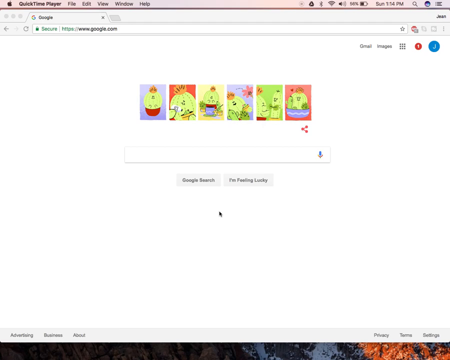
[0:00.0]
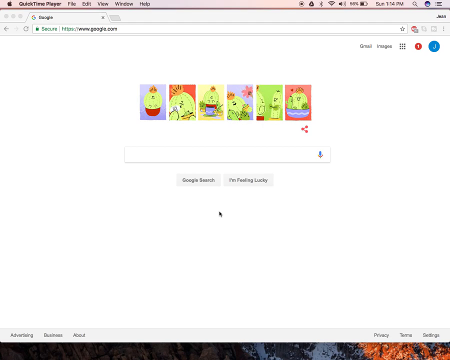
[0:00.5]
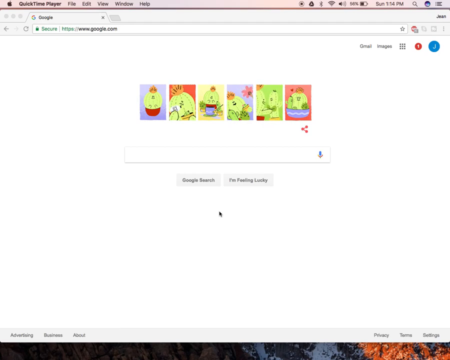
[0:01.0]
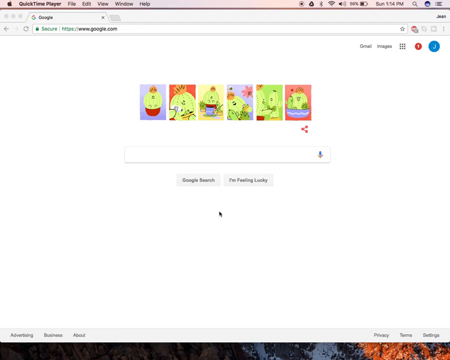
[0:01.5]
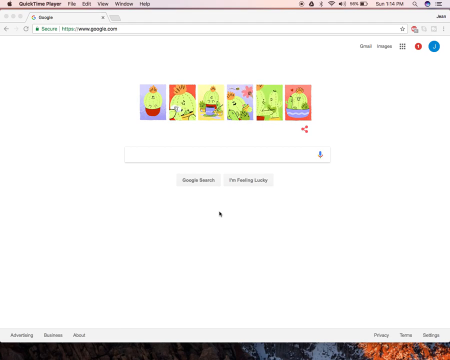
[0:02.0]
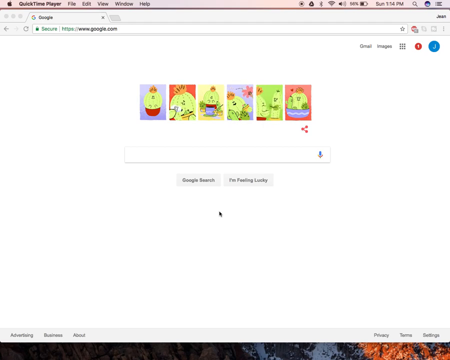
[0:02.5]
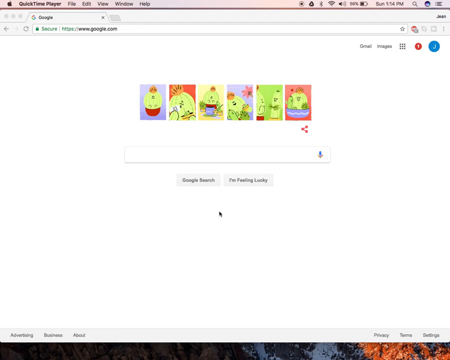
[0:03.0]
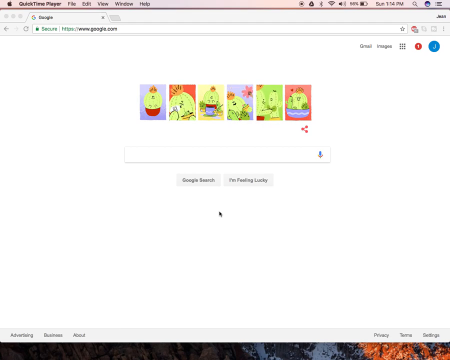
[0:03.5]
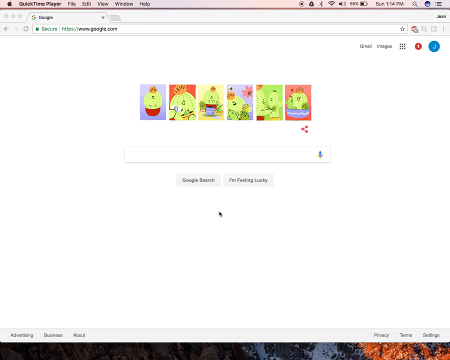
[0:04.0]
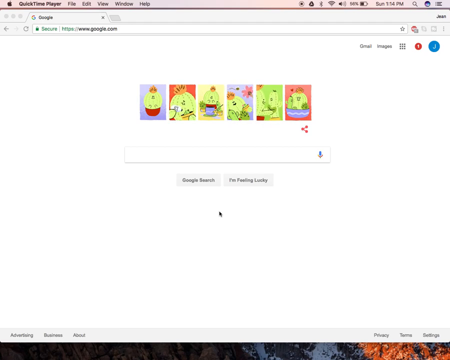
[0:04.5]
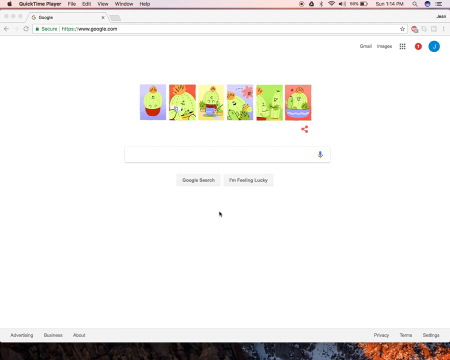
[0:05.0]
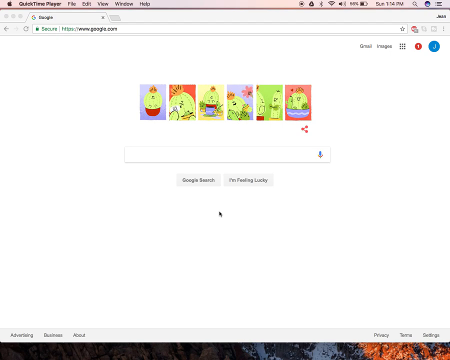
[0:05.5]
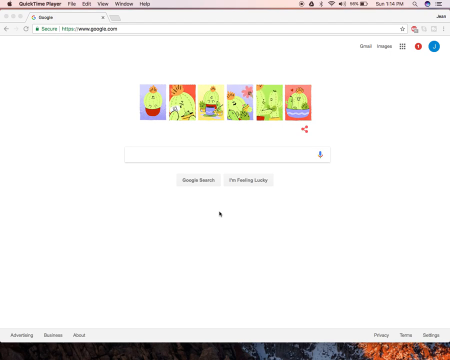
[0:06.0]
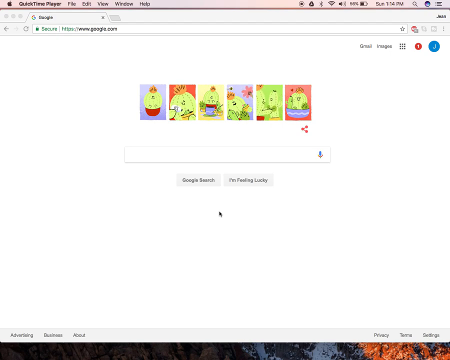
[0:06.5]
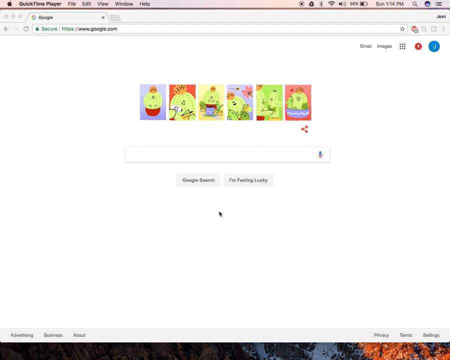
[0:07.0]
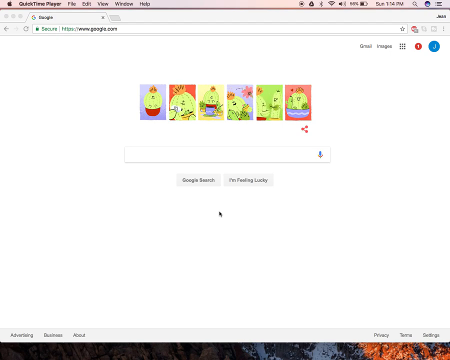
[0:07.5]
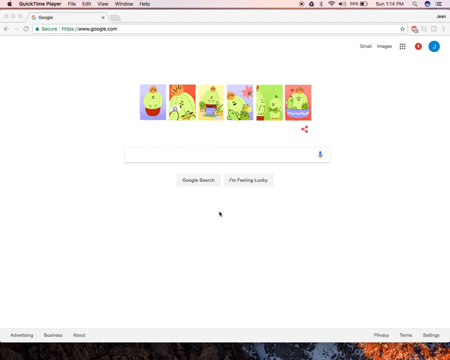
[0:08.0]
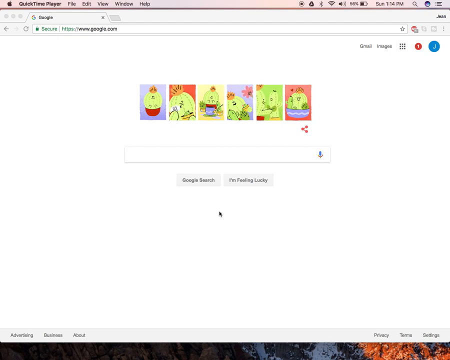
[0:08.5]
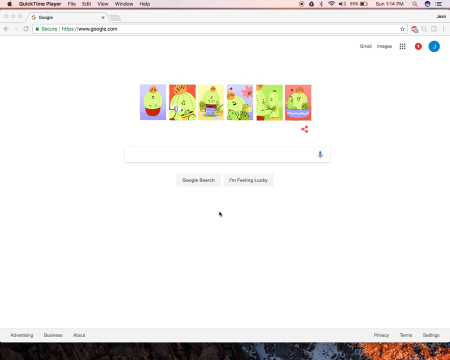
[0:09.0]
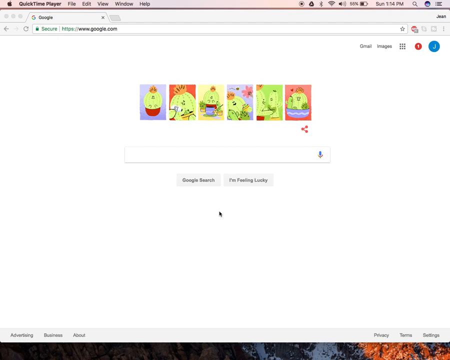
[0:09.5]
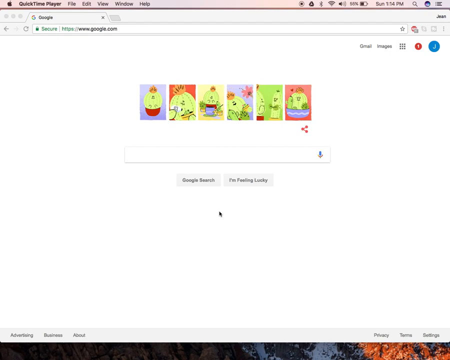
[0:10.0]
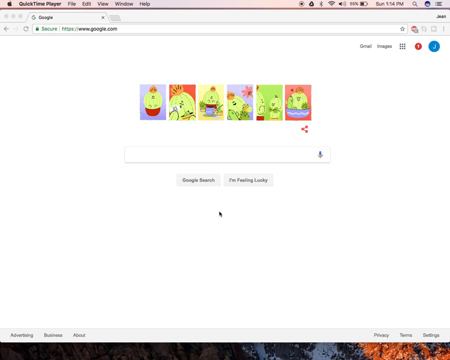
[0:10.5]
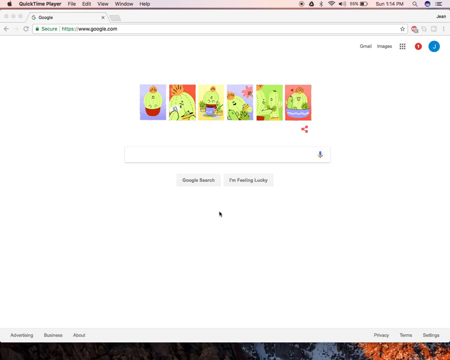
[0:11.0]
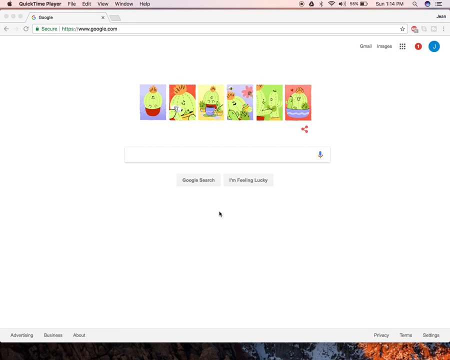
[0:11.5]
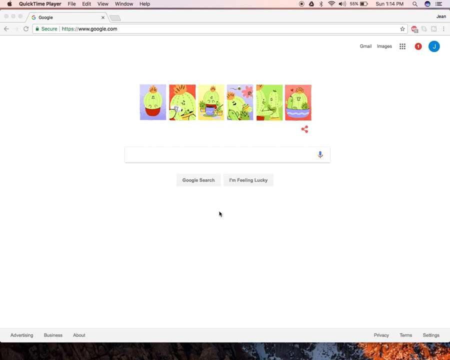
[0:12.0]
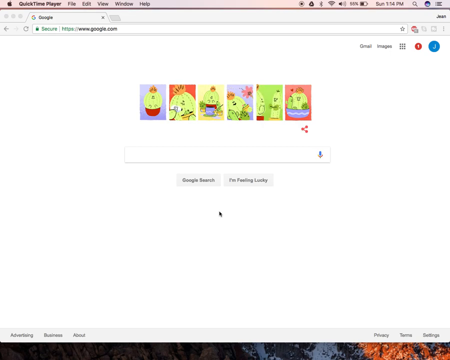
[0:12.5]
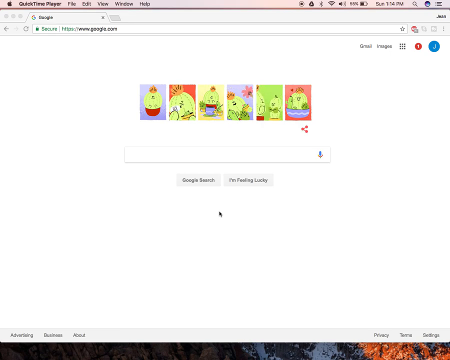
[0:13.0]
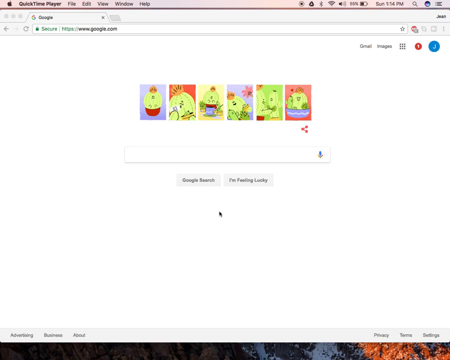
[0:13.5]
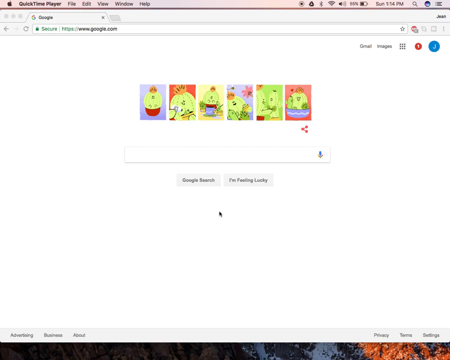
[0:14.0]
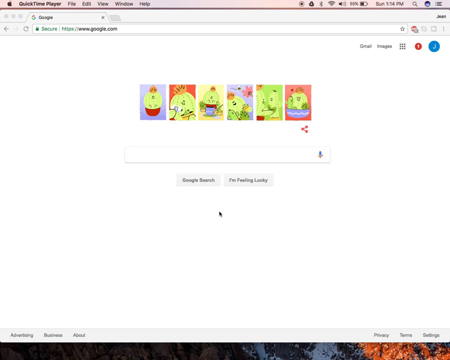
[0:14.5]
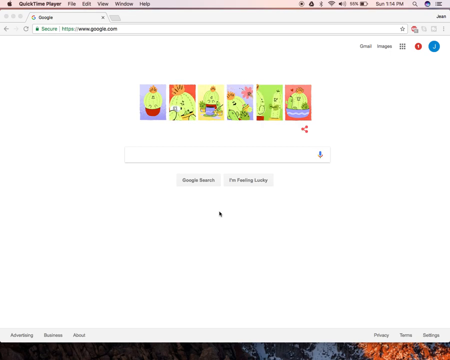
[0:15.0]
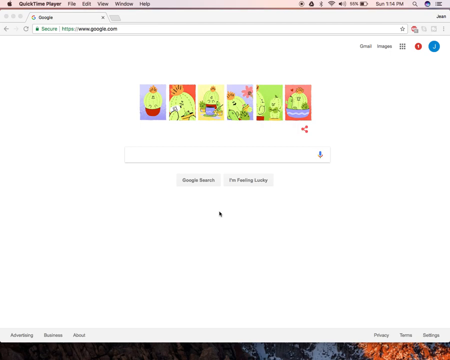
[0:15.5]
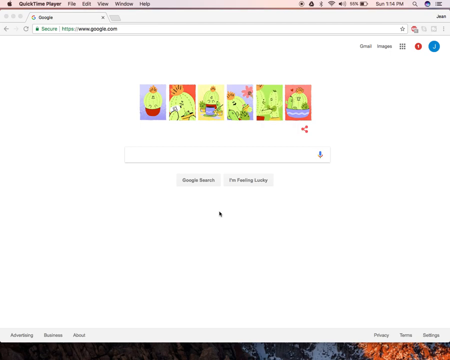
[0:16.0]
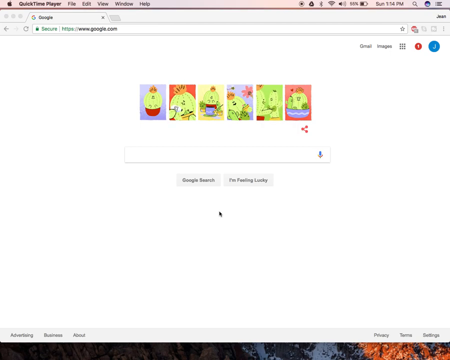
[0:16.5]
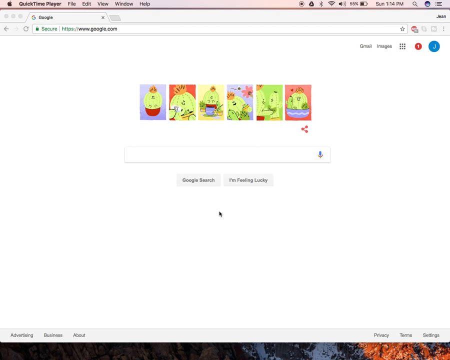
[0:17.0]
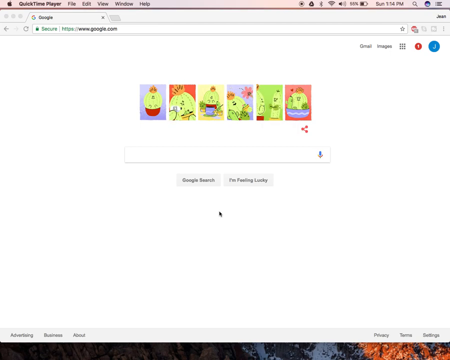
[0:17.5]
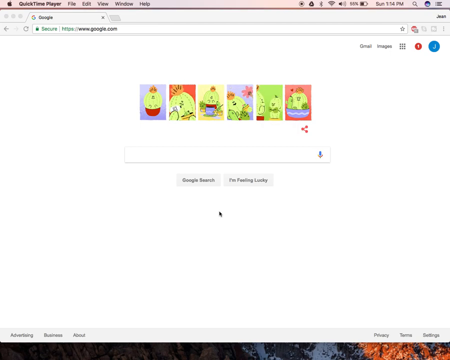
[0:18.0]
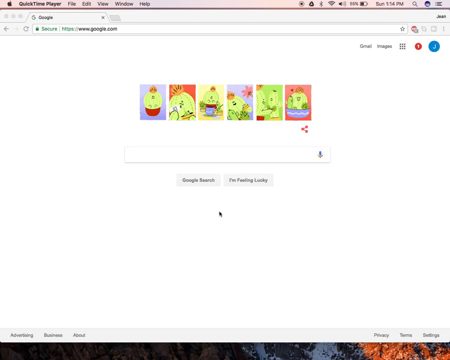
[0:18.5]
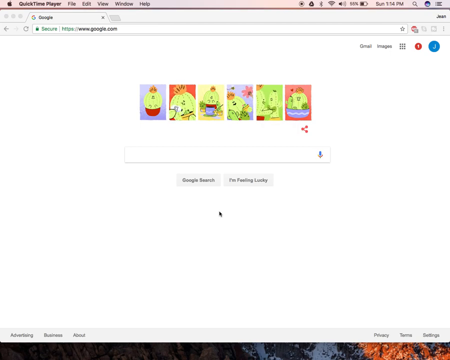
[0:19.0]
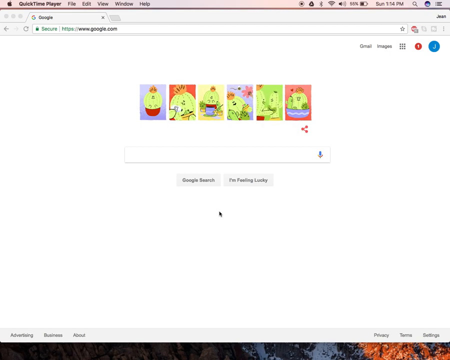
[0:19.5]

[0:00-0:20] Around six cartoon-themed videos are playing. A QuickTime Player window shows menu items for file, edit, view, windows and help, along with a Google search, a Gmail option, an "I'm feeling lucky" option, the time and the internet connection.